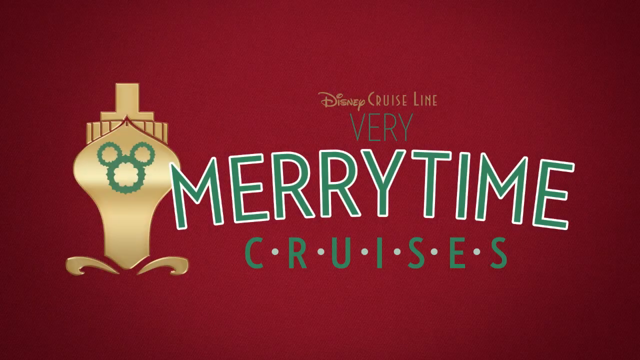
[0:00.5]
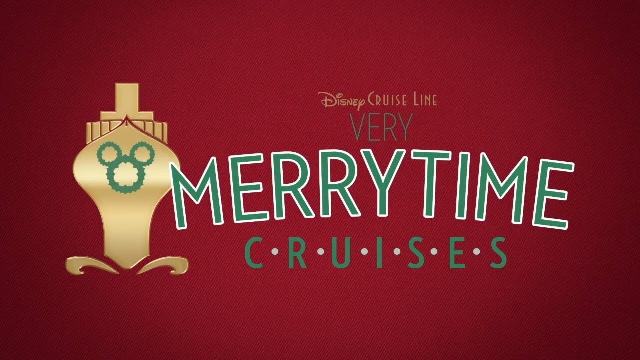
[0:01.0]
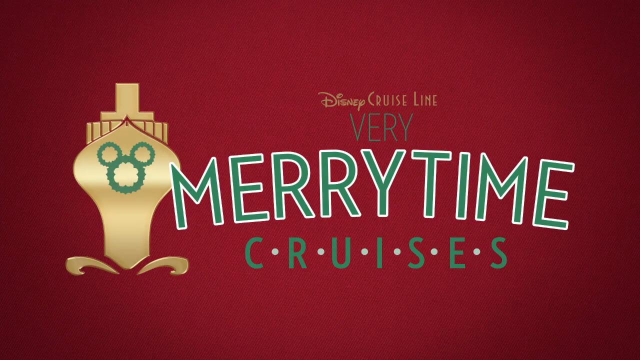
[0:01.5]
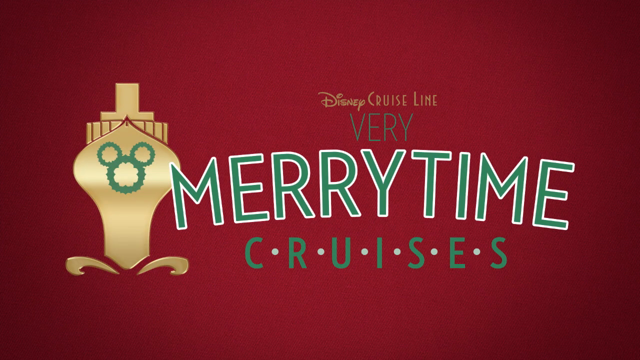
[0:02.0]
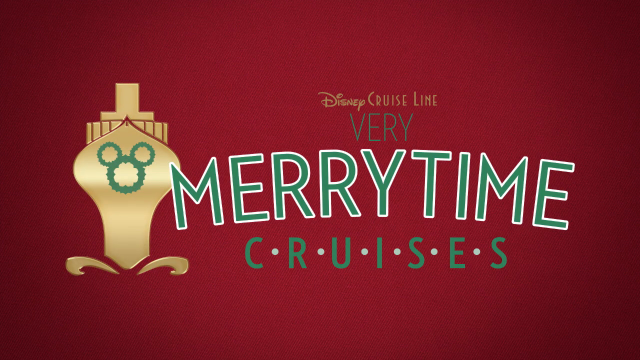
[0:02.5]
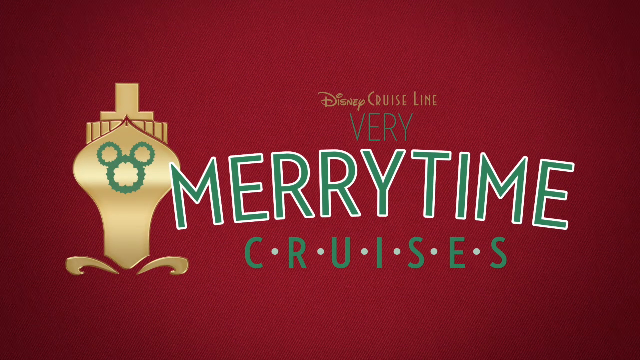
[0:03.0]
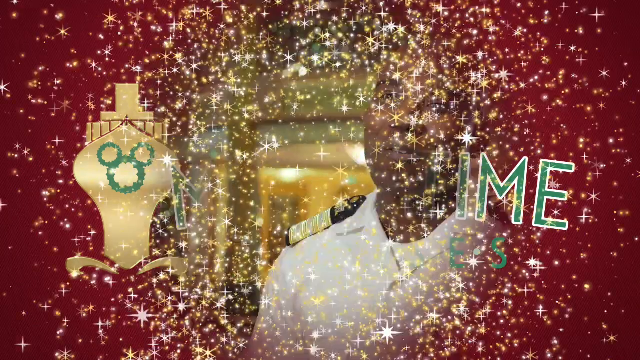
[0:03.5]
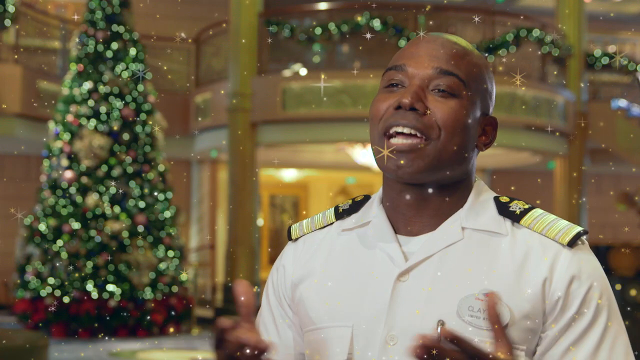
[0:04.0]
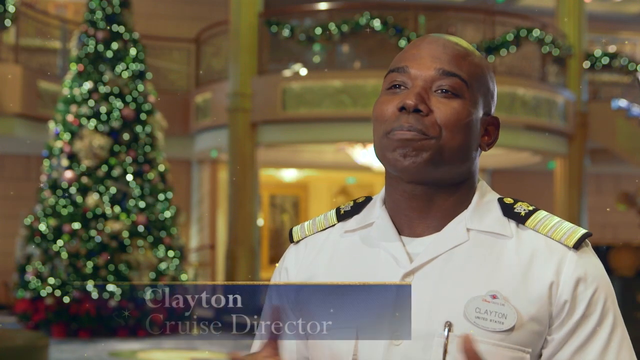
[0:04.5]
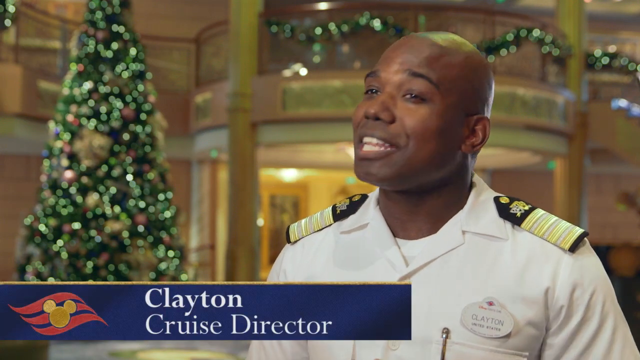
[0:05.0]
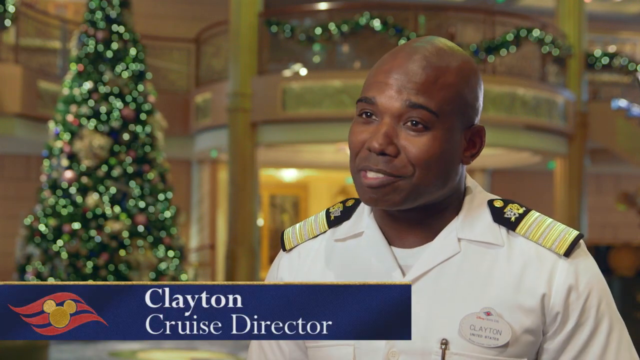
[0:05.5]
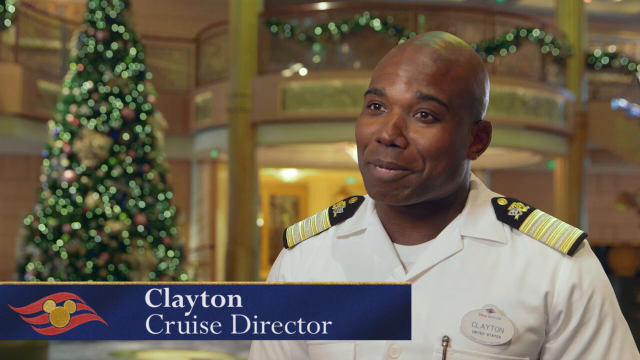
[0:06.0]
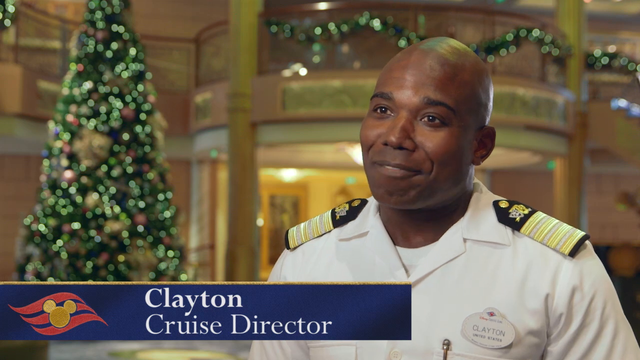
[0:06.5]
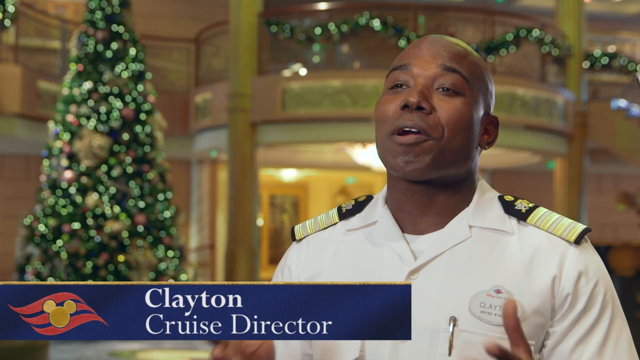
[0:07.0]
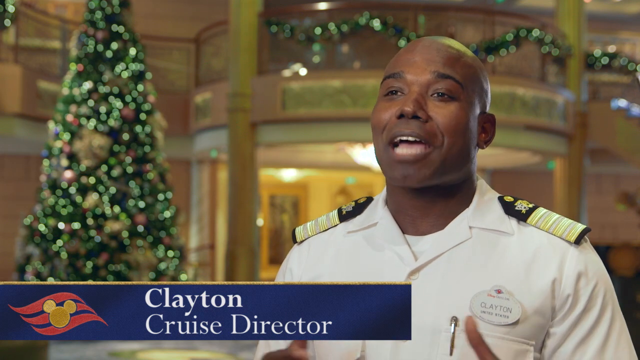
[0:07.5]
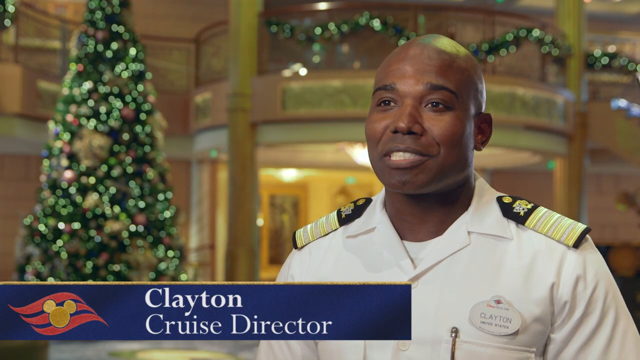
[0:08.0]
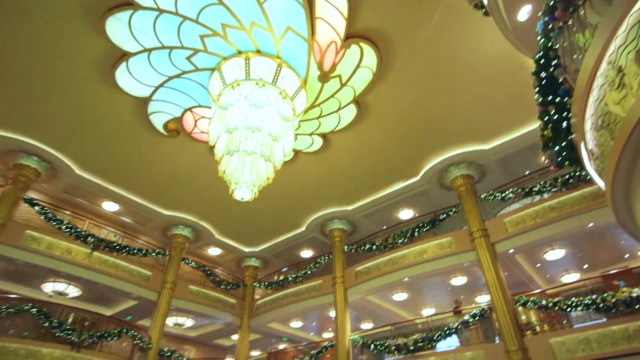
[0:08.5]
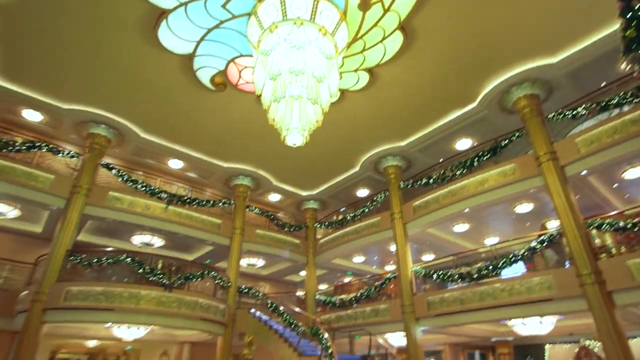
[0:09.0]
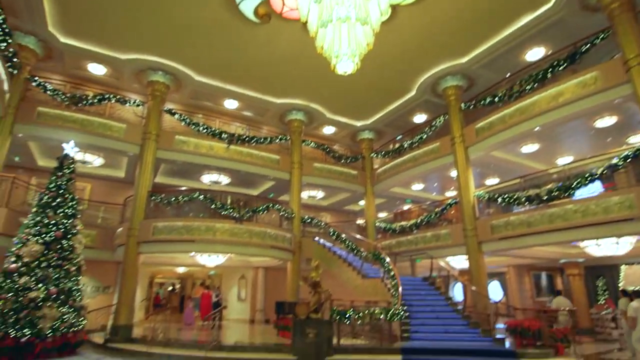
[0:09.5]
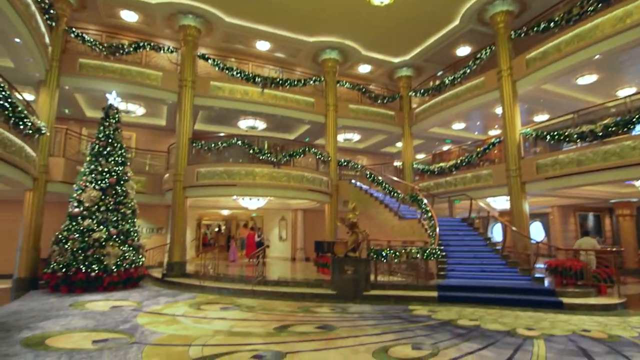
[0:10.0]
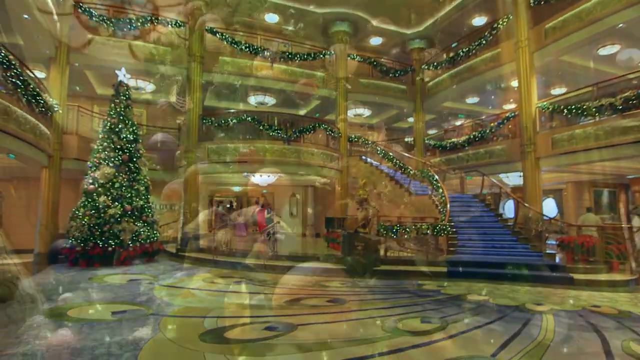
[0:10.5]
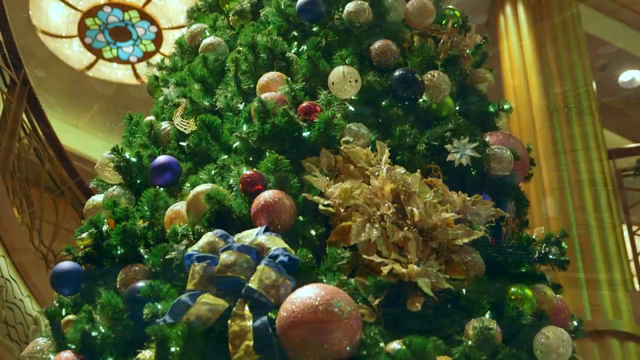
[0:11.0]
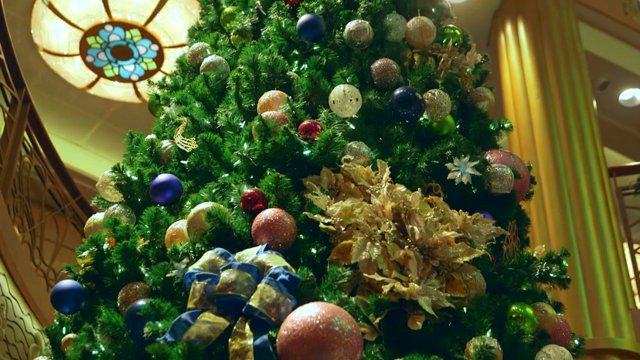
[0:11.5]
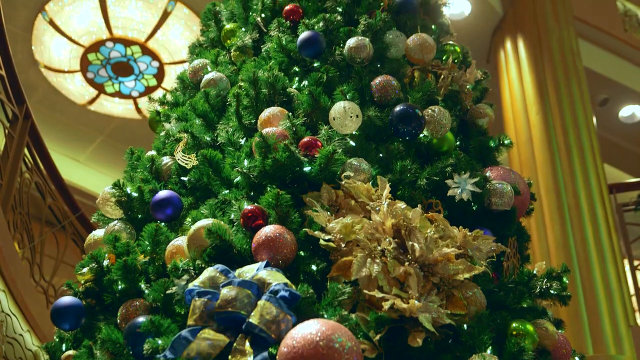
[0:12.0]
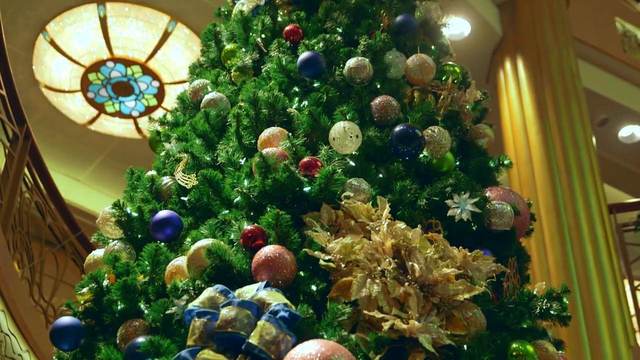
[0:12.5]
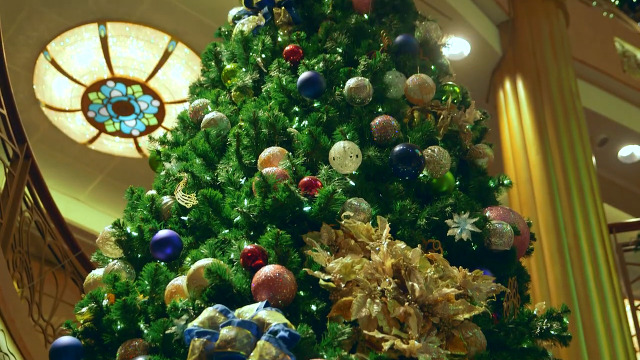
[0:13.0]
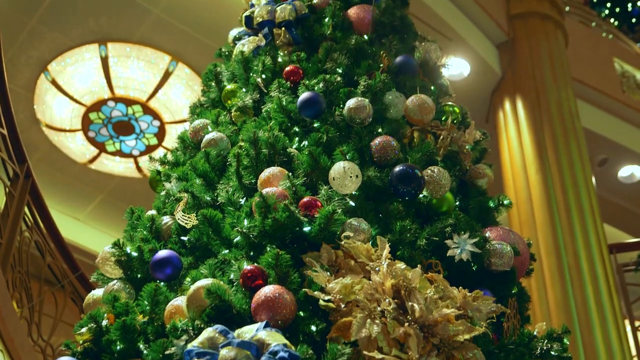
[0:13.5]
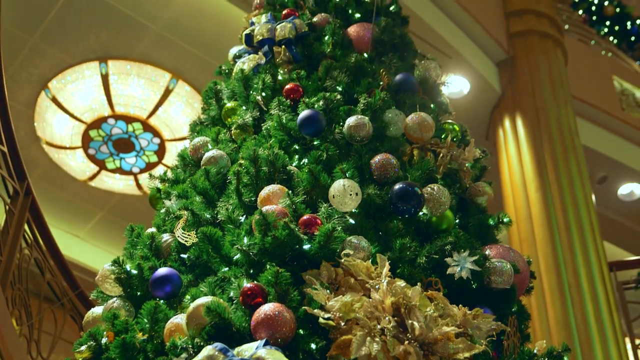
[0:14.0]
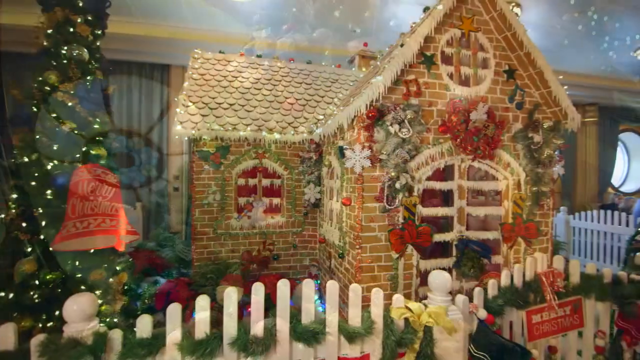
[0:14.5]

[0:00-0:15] Clayton, the cruise director, a Black man, stands in front of a big, sparkling Christmas tree on a cruise ship. The grand atrium has three levels and a big staircase that goes up to the second level, and all of the railings are full of big Christmas greenery garland with twinkling lights. A close-up looks up the huge Christmas tree from the bottom to the top, showing big Christmas balls, other decorations and lots of twinkling lights. A gingerbread house appears that looks like it is made of real gingerbread; it is practically life-size, about the size of a tall adult, with lots of red and green decorations on top and icing made to look like little icicles all over the windows and roof.